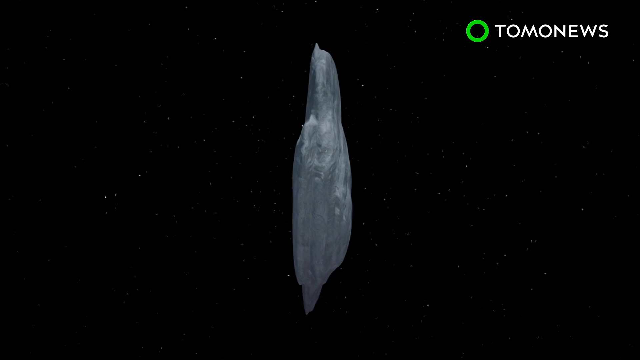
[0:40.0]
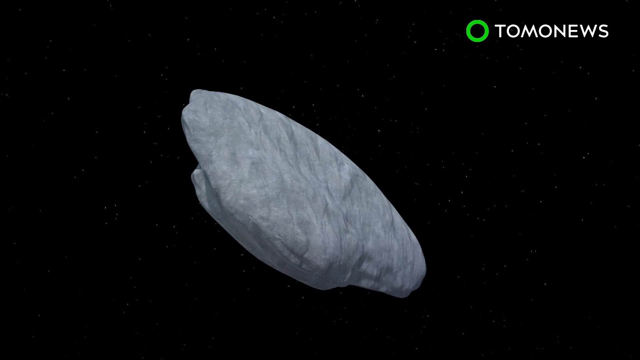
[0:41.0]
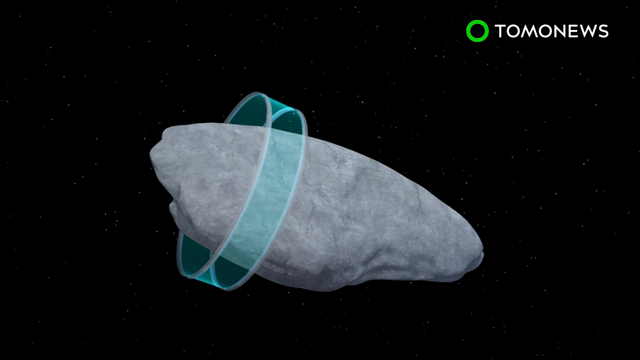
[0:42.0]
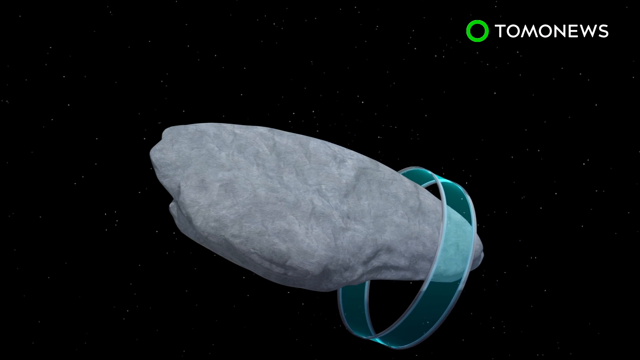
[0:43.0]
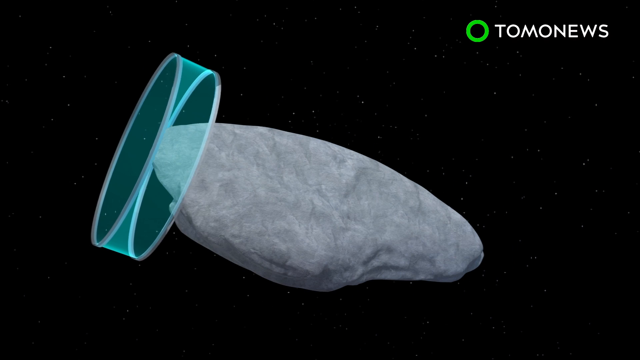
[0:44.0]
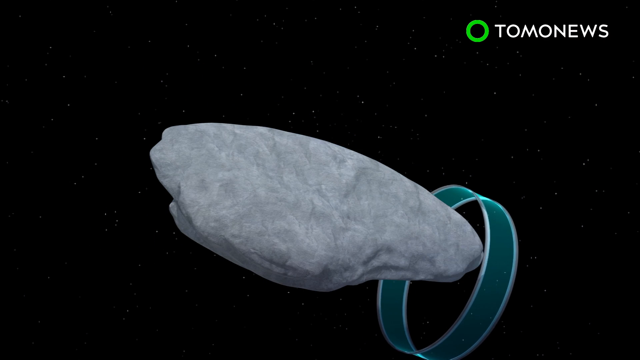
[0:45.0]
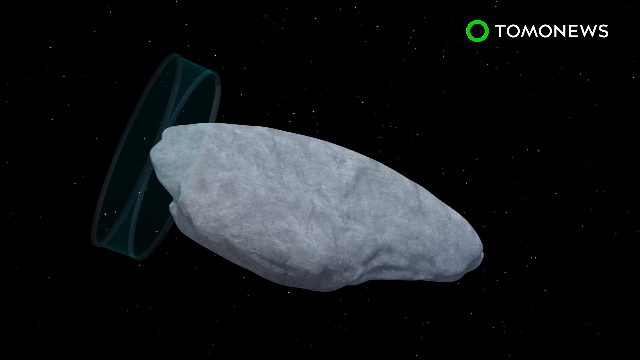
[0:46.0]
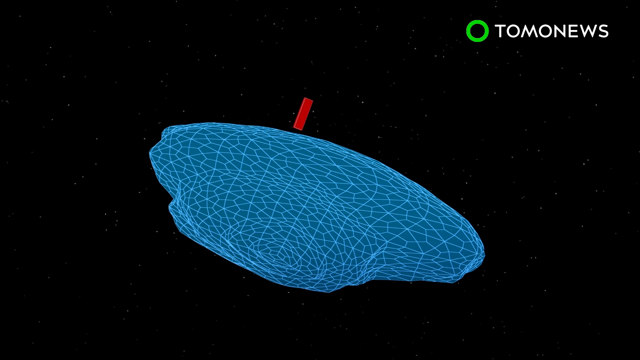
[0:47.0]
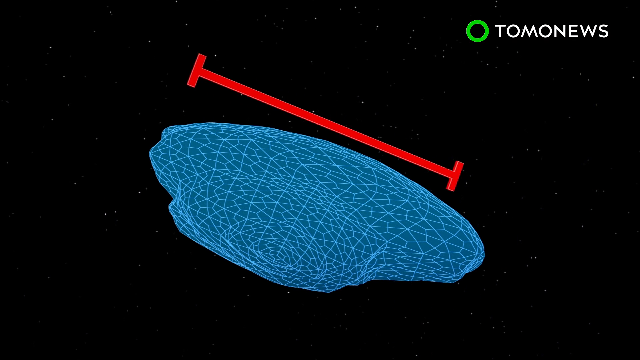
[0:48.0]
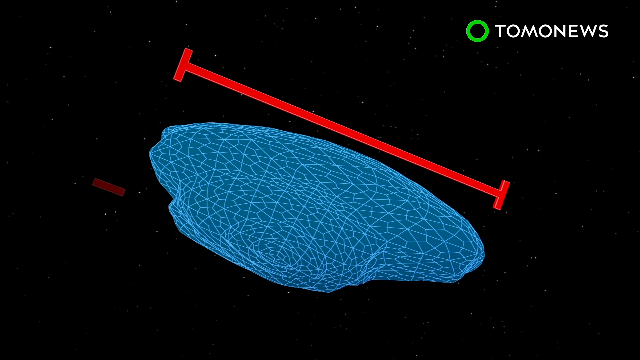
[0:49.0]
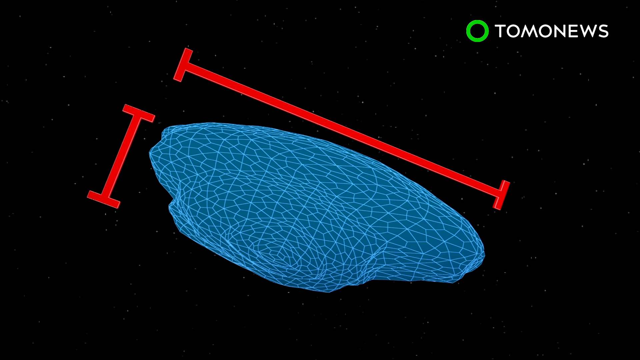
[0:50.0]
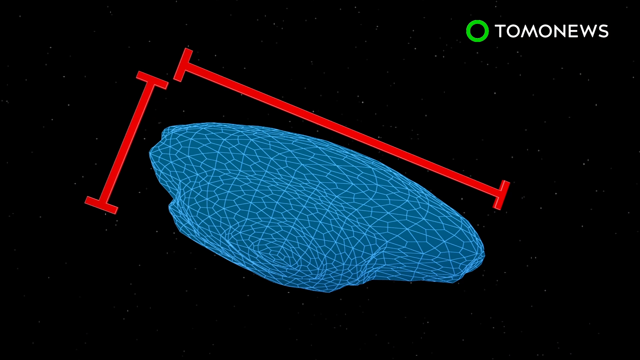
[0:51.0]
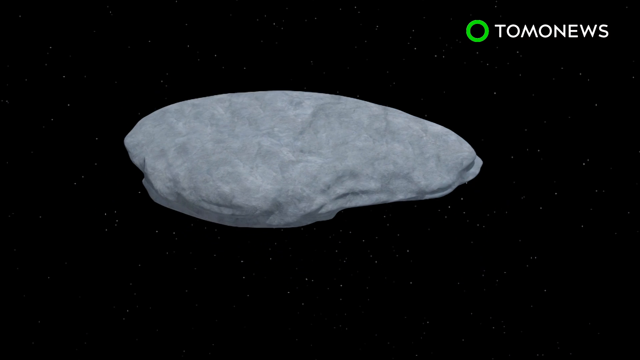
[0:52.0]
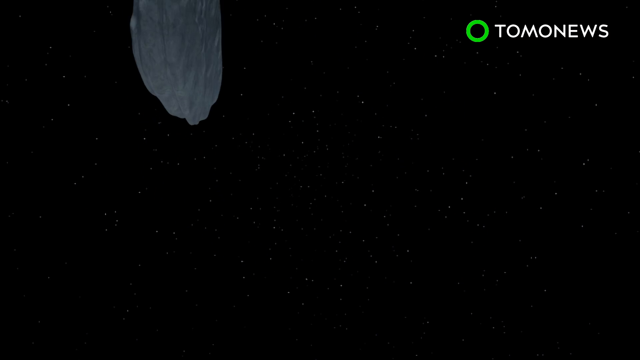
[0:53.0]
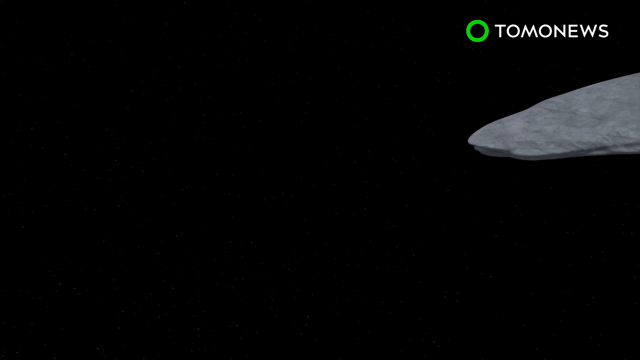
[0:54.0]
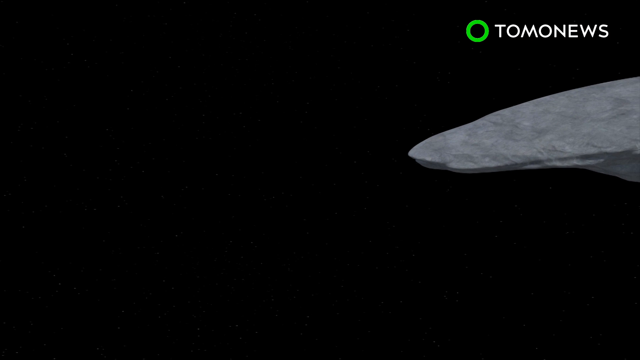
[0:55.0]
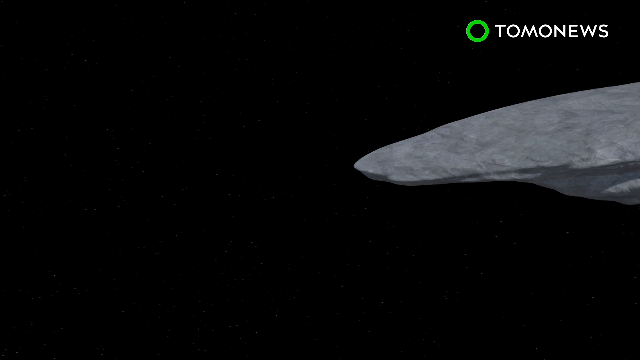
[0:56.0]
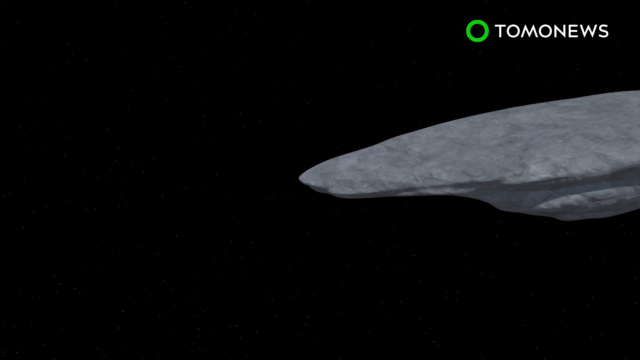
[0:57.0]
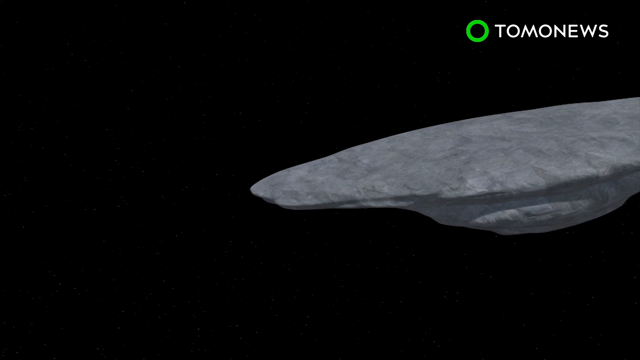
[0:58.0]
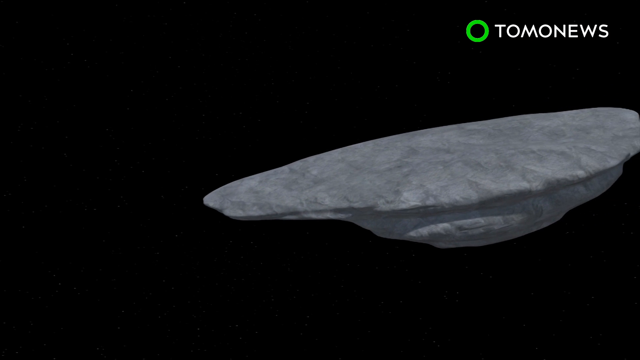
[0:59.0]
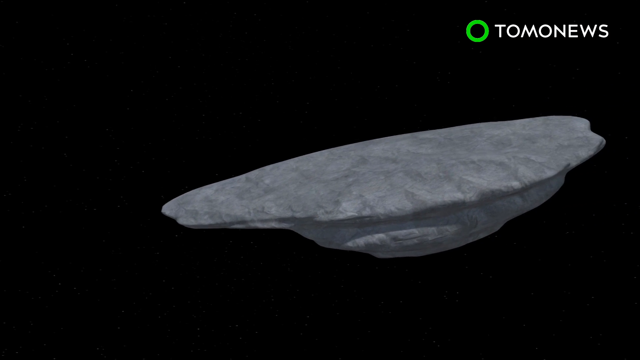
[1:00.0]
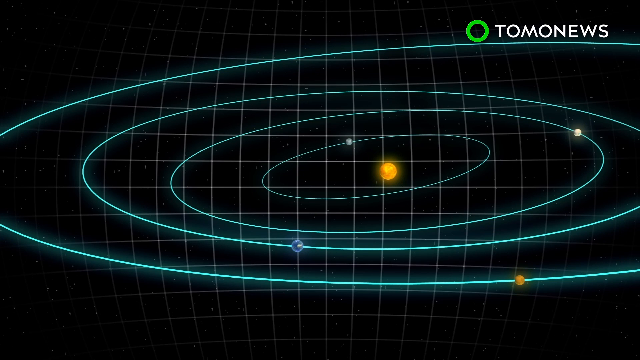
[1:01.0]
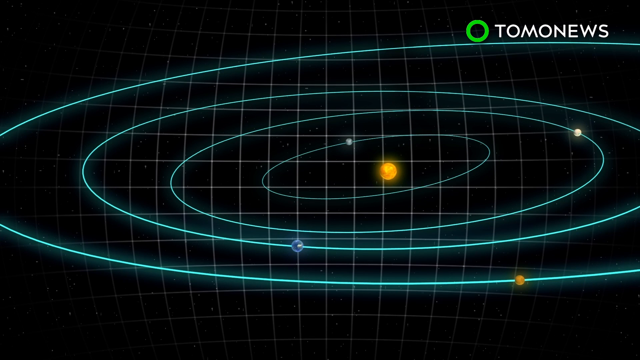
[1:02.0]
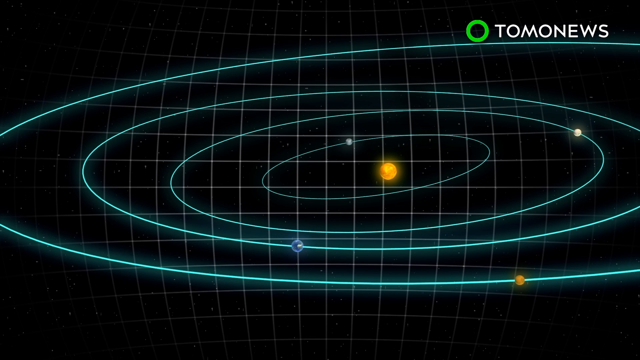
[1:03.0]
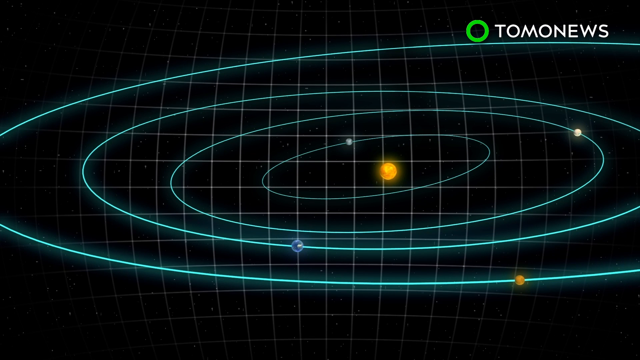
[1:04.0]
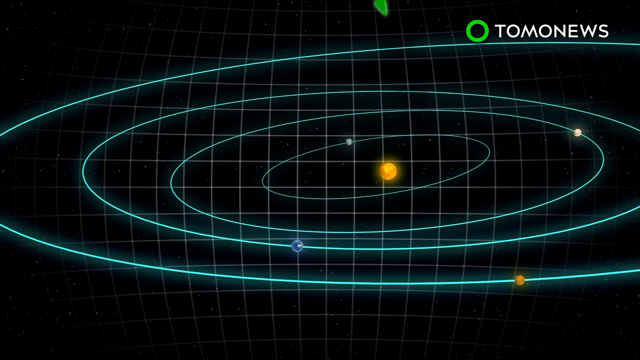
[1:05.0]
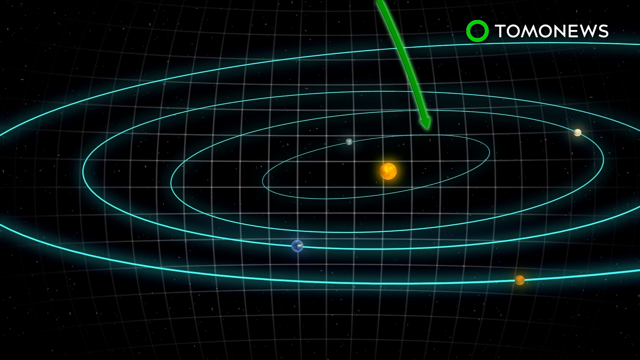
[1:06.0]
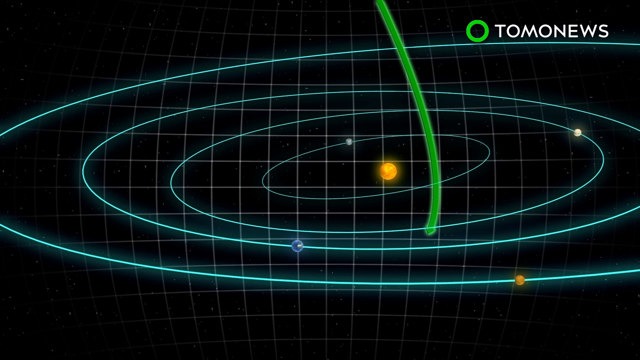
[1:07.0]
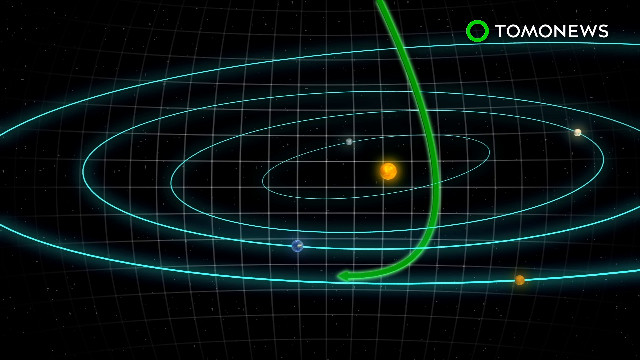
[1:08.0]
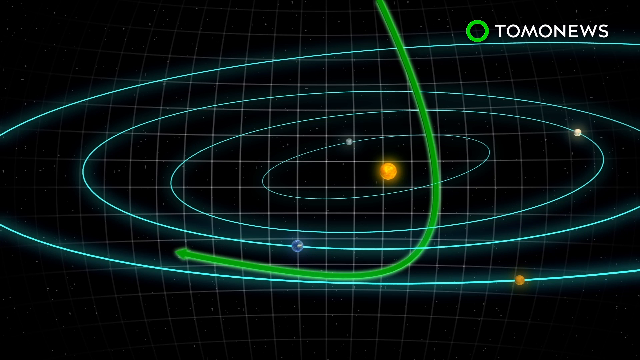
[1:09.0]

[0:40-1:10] The large object in space is shown, very oval in shape and currently vertical. It is grayish and looks like it is made of rock. The background is the dark black sky with many little white dots forming stars. The object floats and turns in the sky. An animation shows a large ring appearing around the stone-shaped object; the ring is slightly transparent and greenish, and it sort of moves back and forth to the left and right of the object. The object then turns a bluish color with something kind of like a graph and squiggly lines on it. A large red line appears above the object, kind of measuring its size, and then another line appears at the other side or edge of the object, measuring its horizontal extent, width and length. That disappears, and a different scene shows the object floating slowly through space from right to left. The scene changes again to a view of space with the stars and the sun. A green line appears from the top middle of the frame, goes downward and then curves to the left.